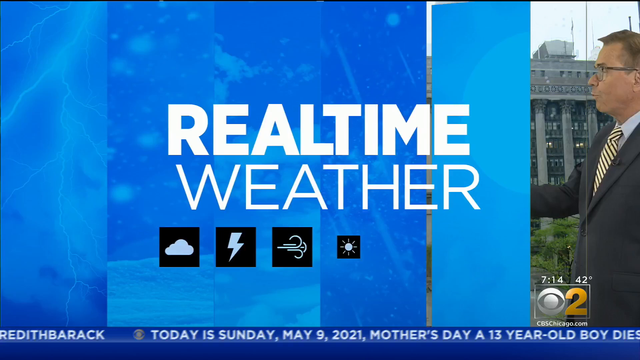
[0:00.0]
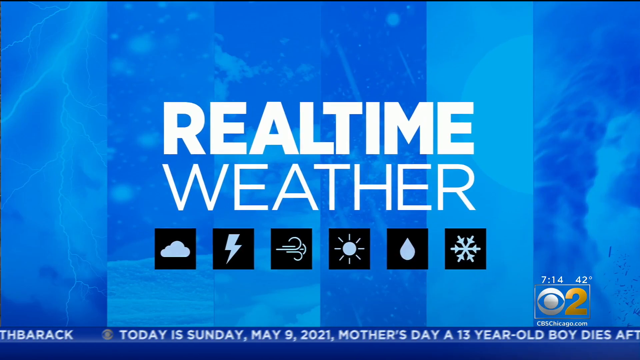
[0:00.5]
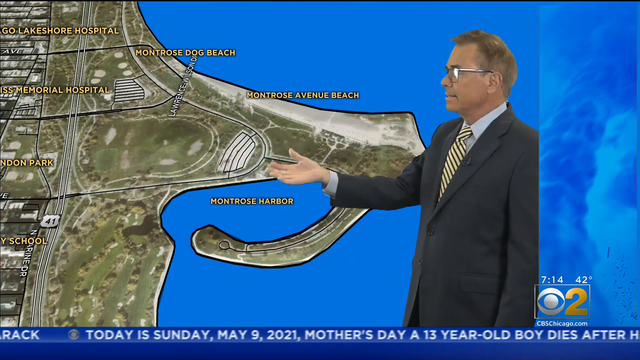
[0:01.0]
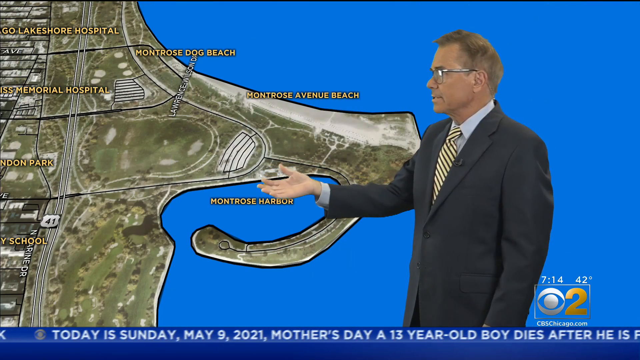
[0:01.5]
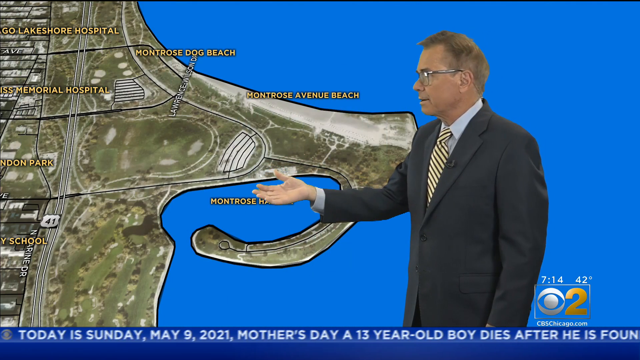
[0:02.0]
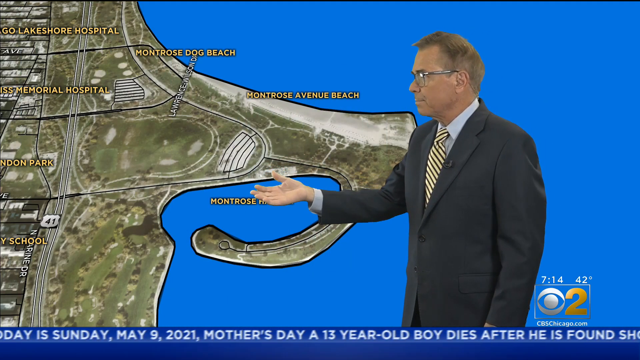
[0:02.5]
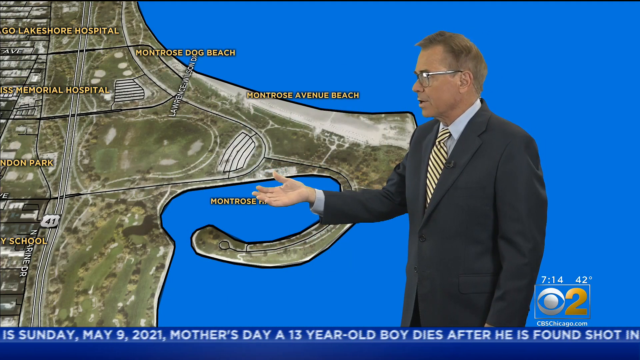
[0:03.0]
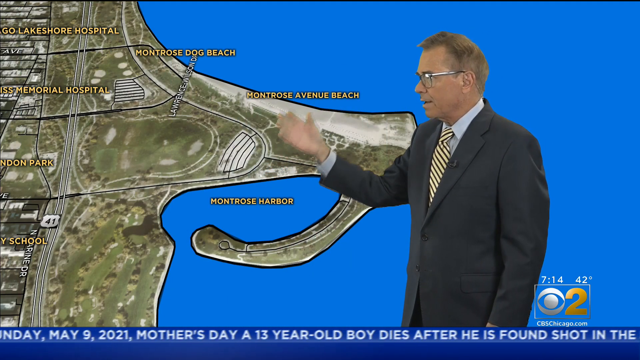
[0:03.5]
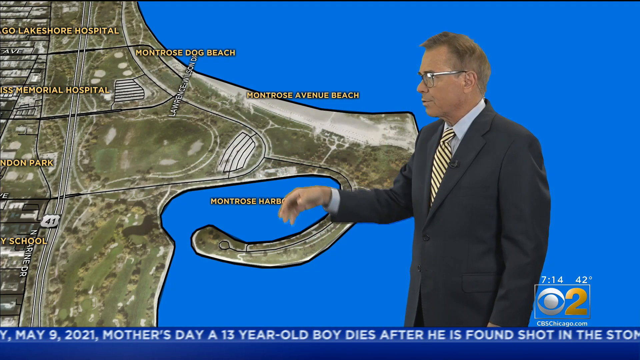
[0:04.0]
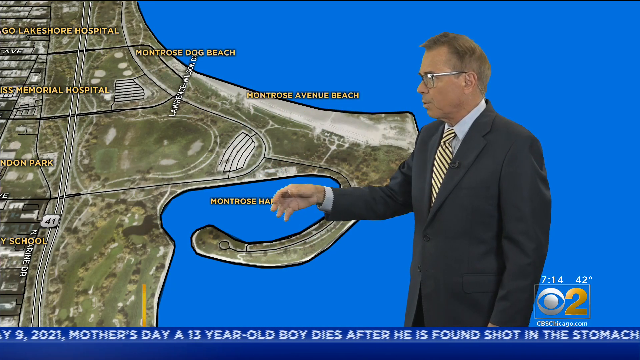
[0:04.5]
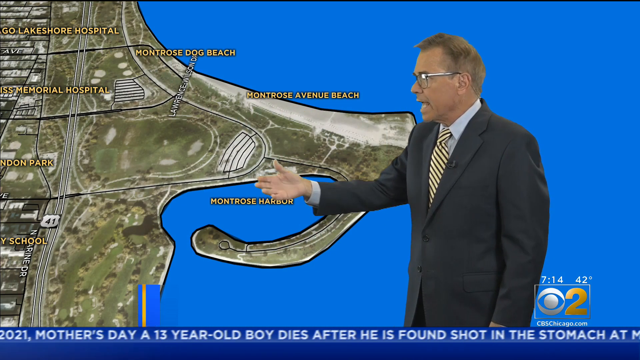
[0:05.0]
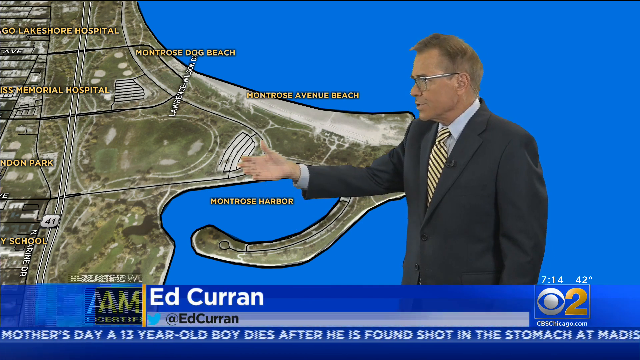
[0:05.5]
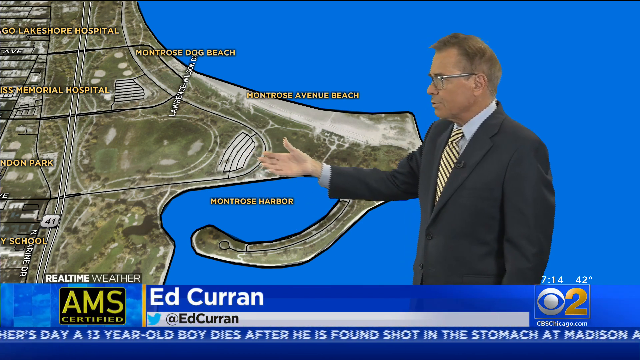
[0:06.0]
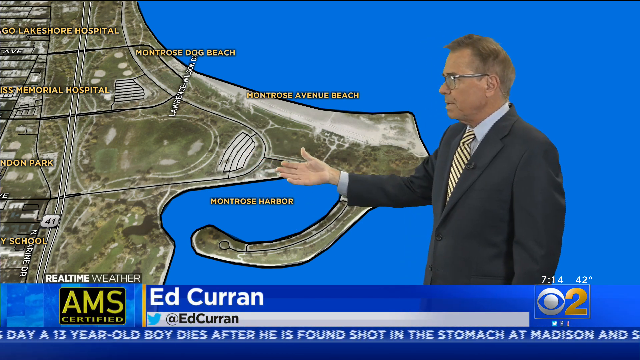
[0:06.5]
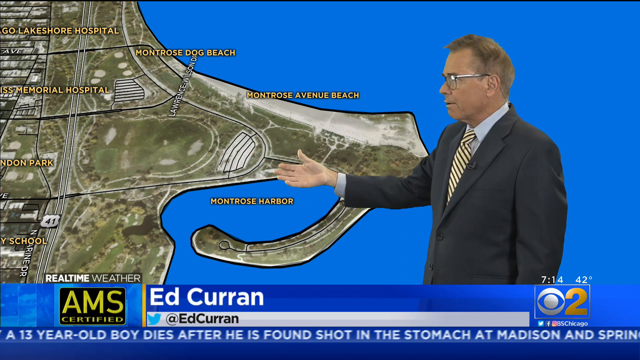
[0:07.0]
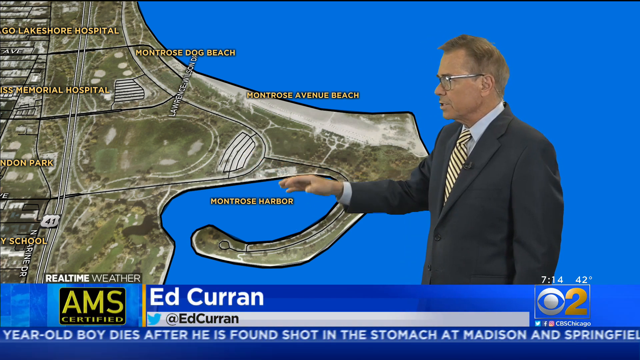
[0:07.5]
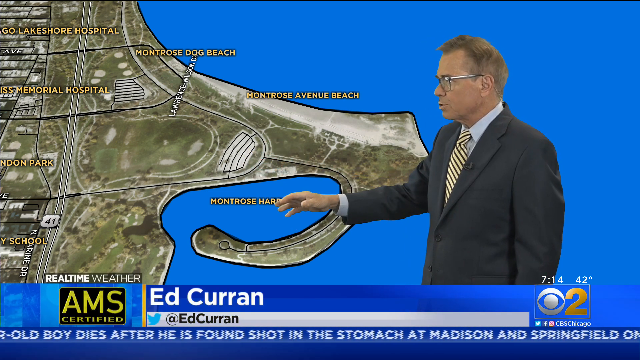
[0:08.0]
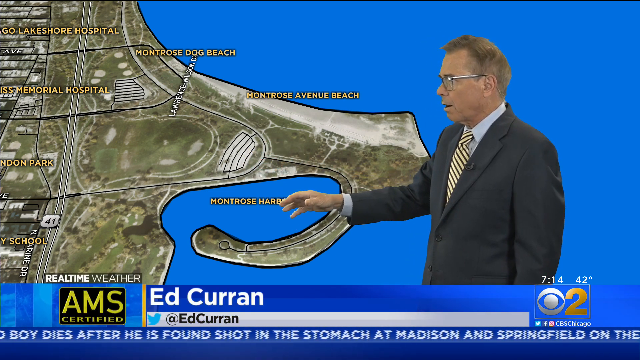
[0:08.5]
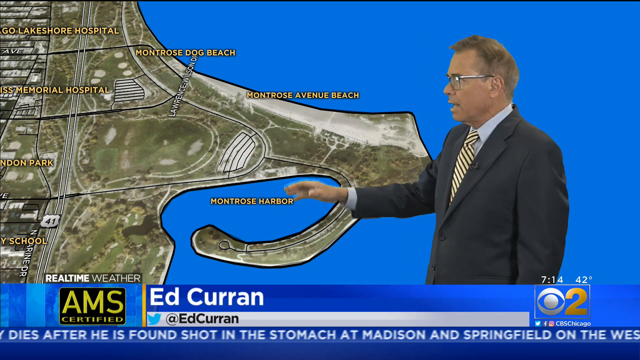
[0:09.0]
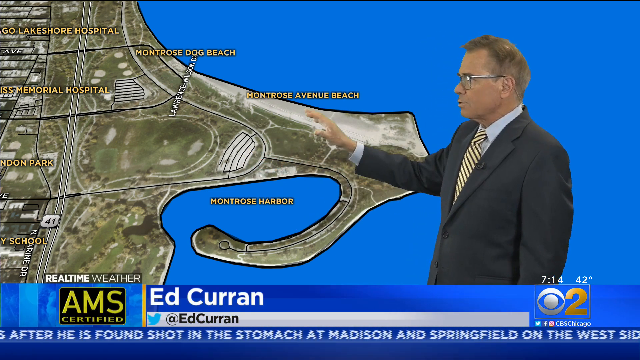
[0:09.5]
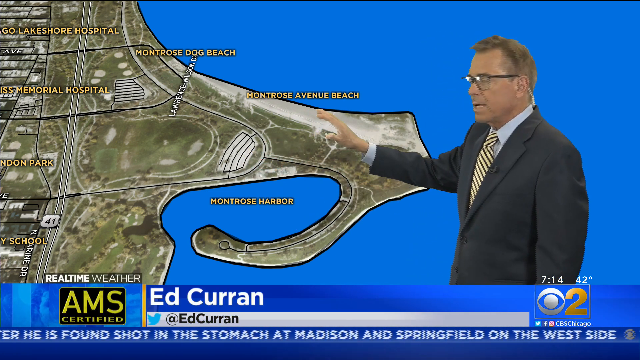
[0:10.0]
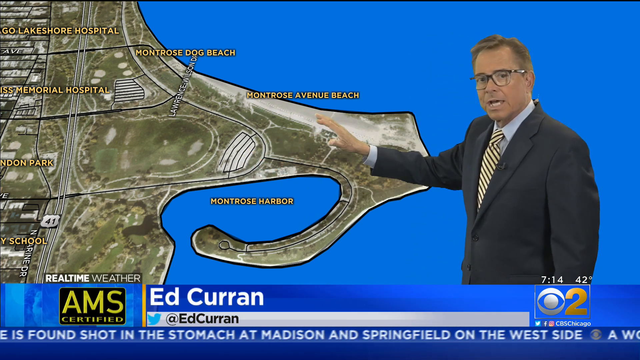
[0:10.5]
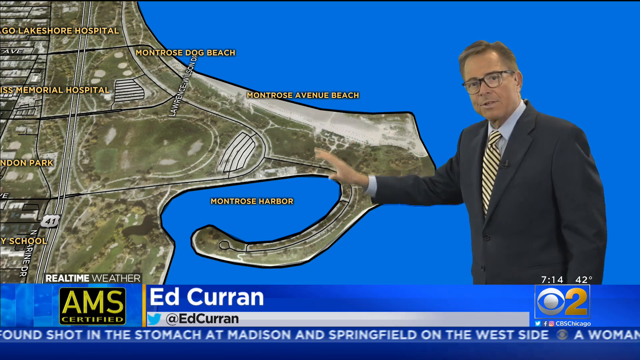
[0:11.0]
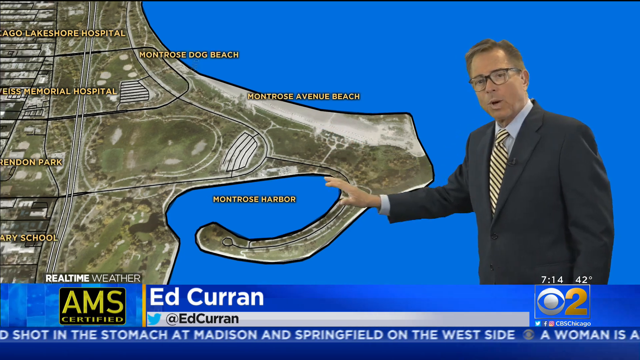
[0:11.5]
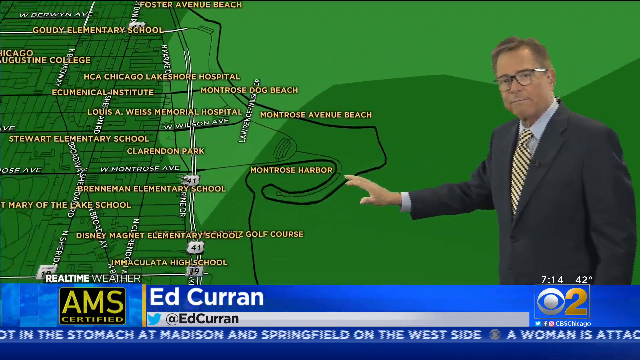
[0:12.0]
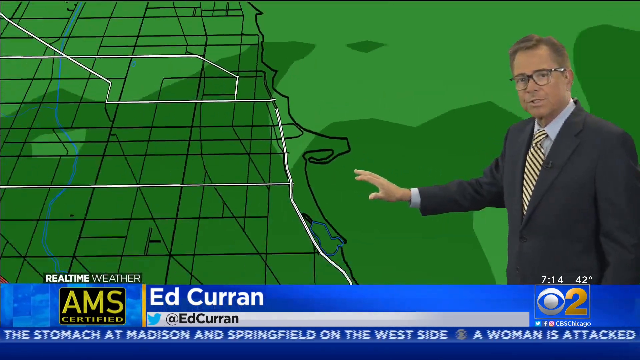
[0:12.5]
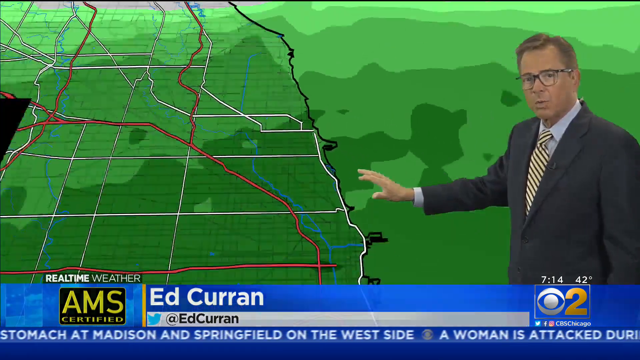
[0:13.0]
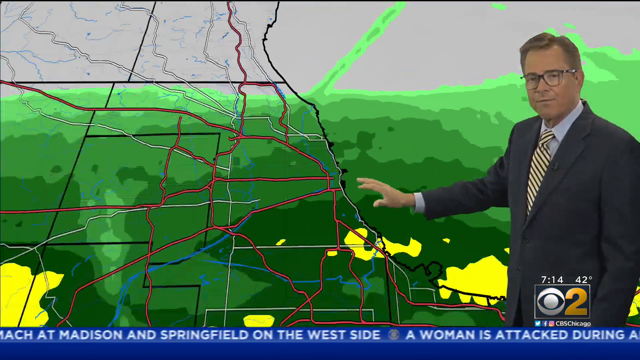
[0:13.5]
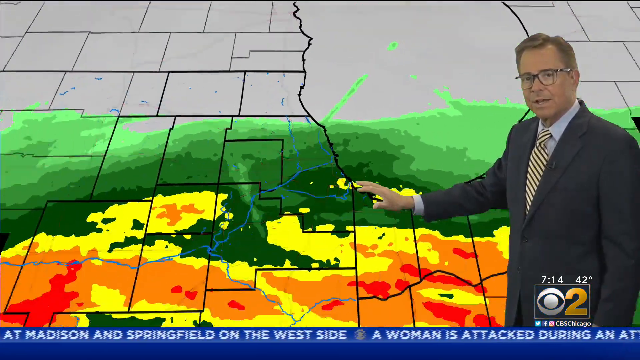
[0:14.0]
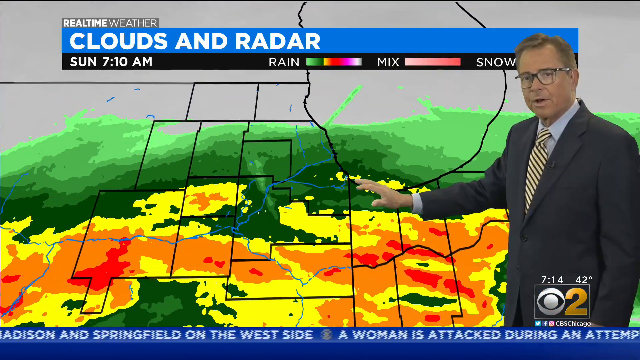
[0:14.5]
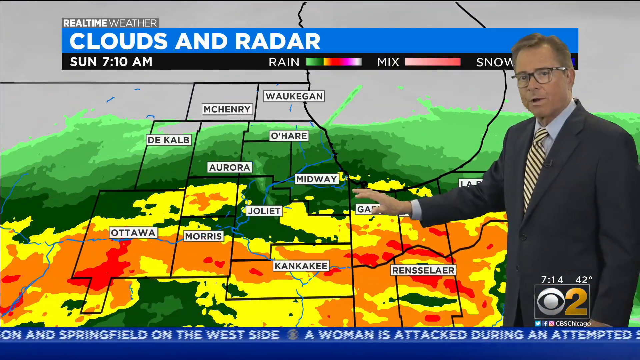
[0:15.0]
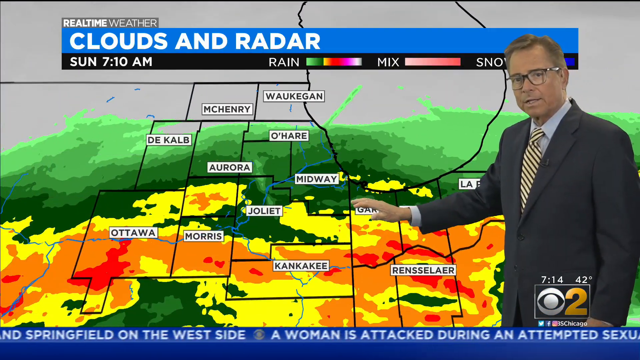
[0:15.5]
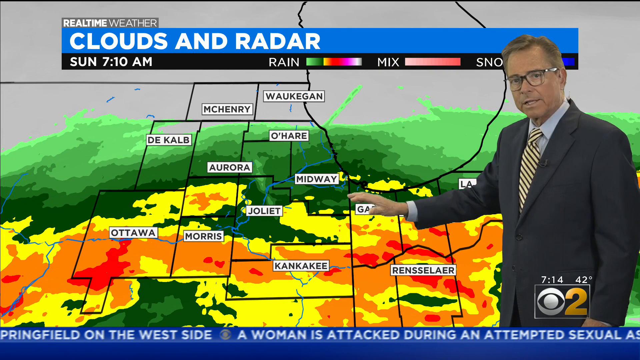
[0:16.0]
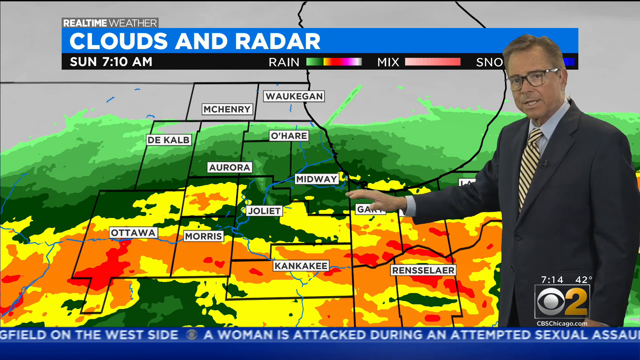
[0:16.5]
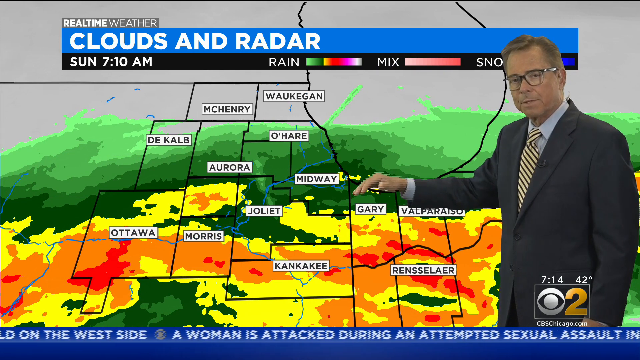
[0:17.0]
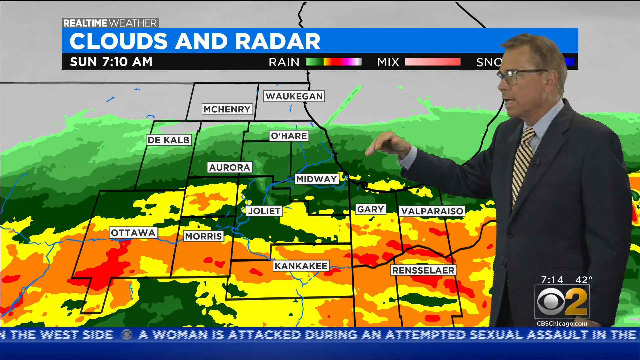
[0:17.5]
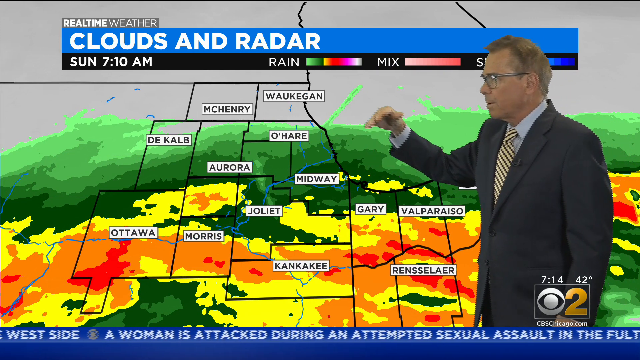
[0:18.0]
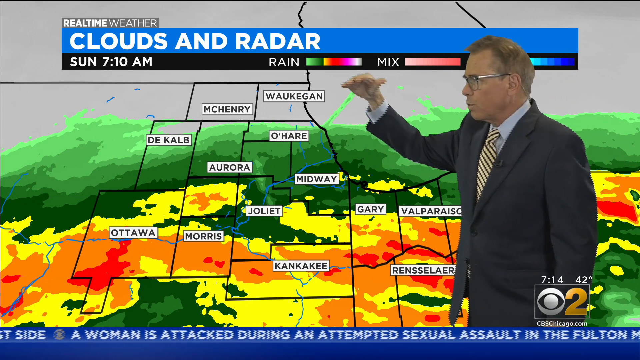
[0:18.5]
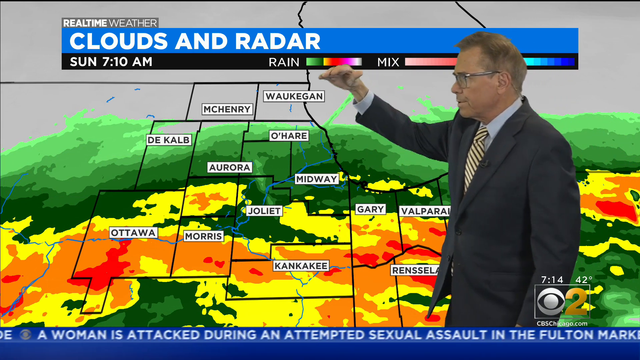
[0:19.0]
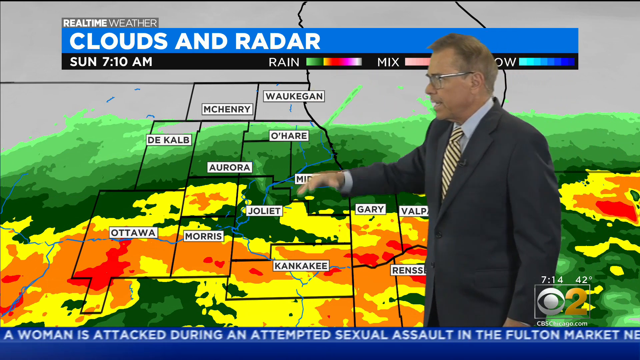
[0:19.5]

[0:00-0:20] A weather forecast is presented by Ed Curran, a white male who appears to be in his late 40s. A map is shown, and he reads a map of the clouds and the radar. The broadcast is live, conducted on a Sunday at 7:30 a.m. The forecast covers different cities in a particular country: the background shows the places where it will be sunny, where it will be hot, and where rain is likely, indicated in orange, with yellow also used. The names of the different cities being analyzed are shown as well.